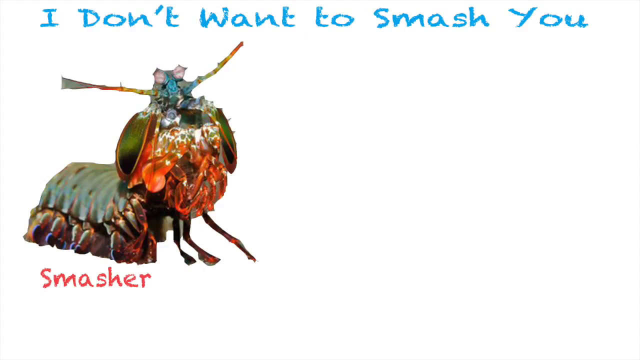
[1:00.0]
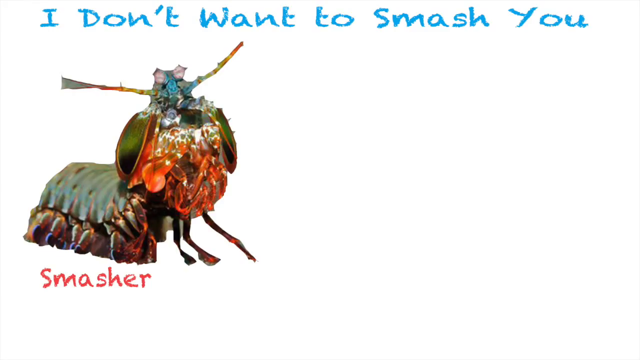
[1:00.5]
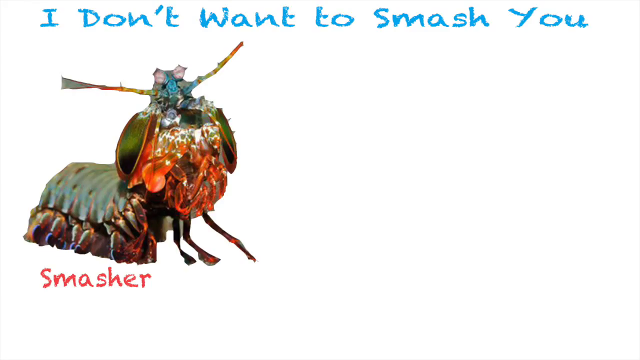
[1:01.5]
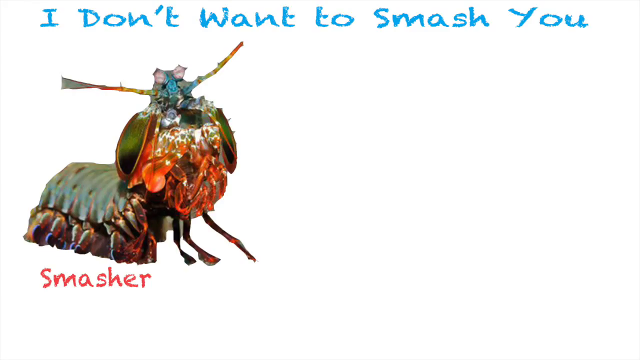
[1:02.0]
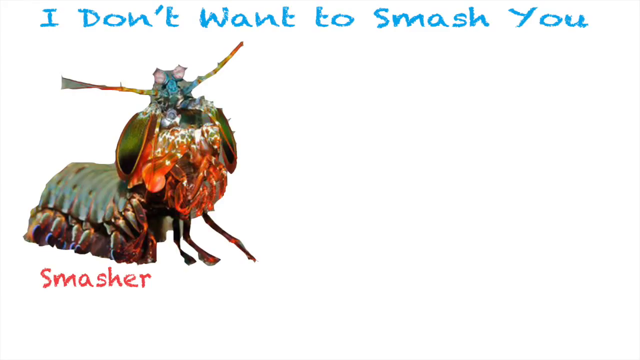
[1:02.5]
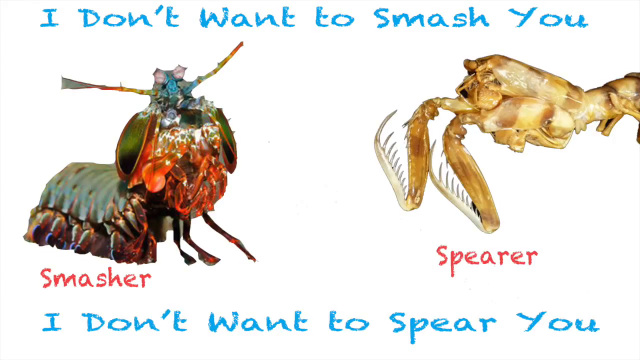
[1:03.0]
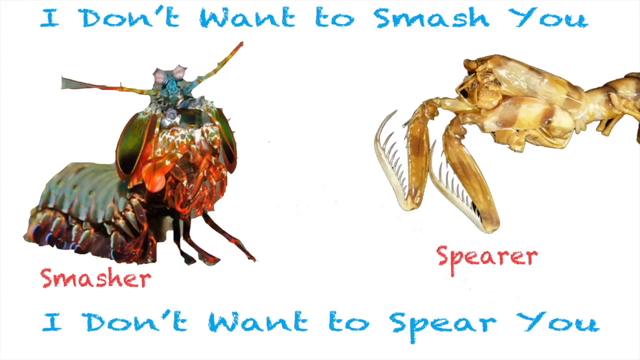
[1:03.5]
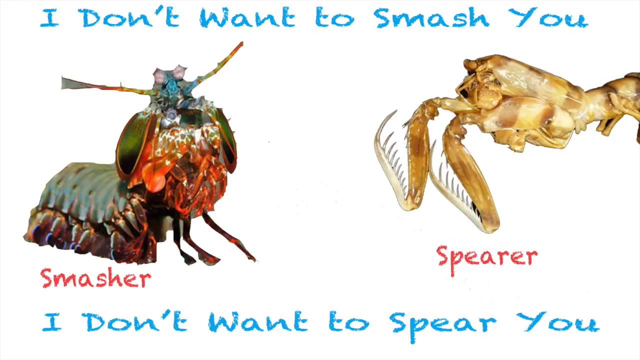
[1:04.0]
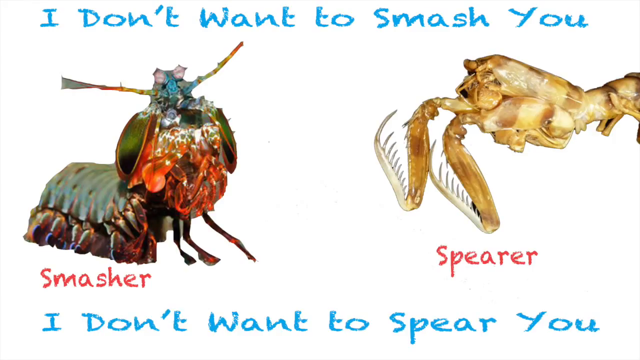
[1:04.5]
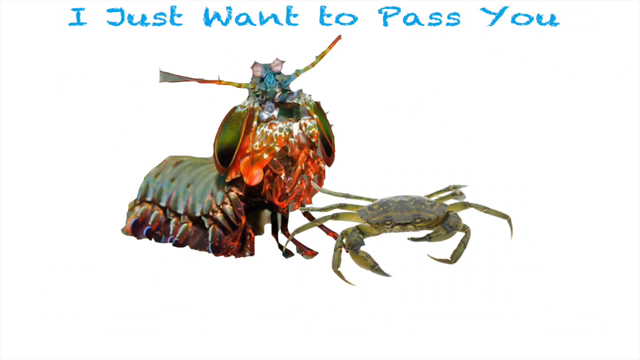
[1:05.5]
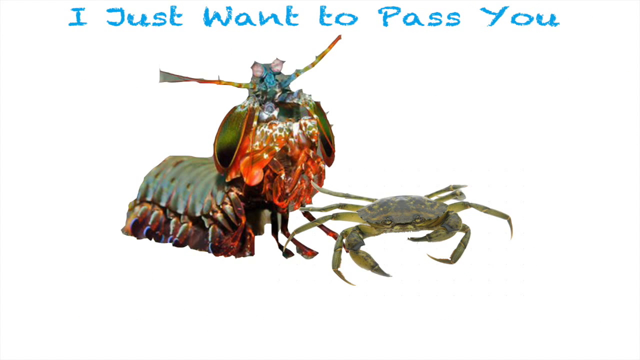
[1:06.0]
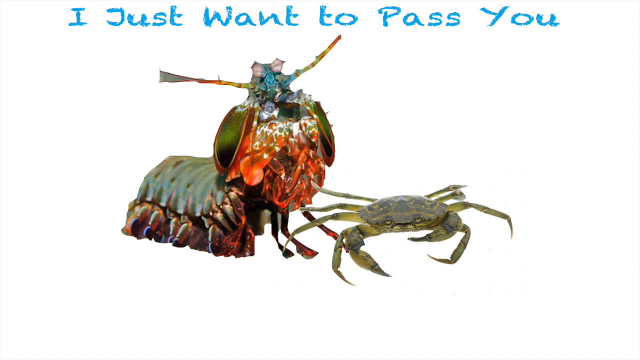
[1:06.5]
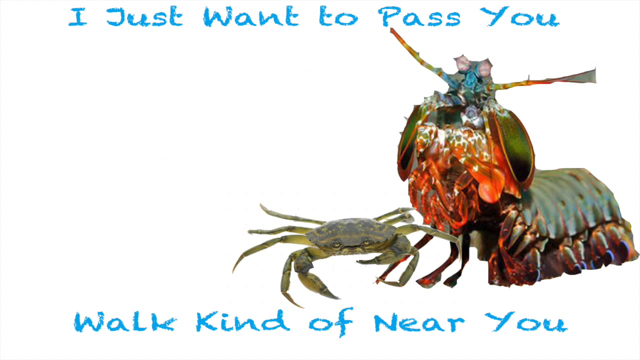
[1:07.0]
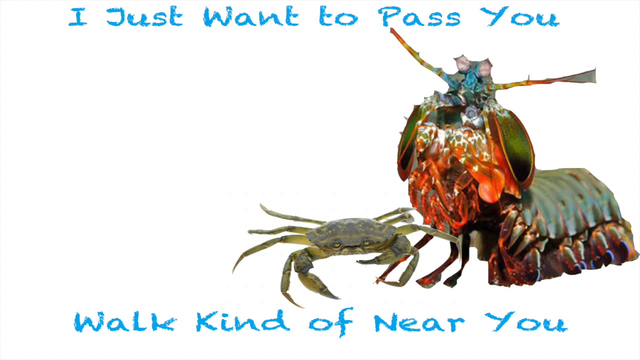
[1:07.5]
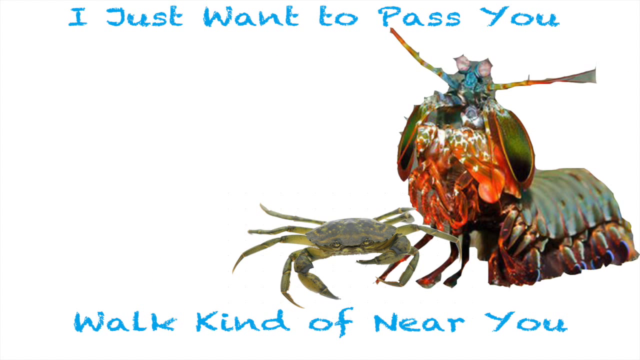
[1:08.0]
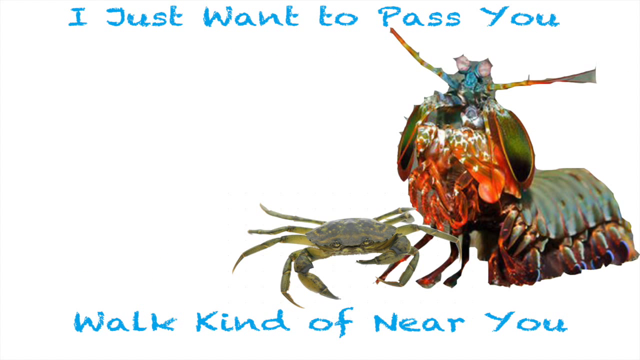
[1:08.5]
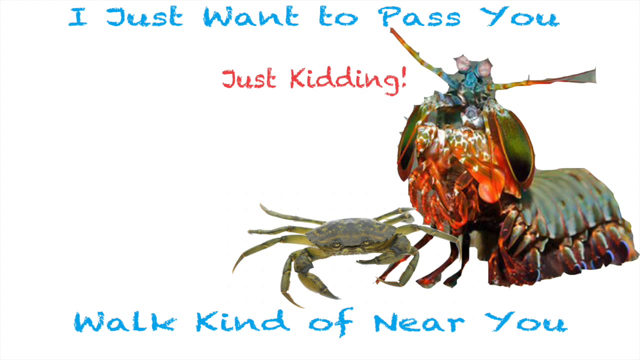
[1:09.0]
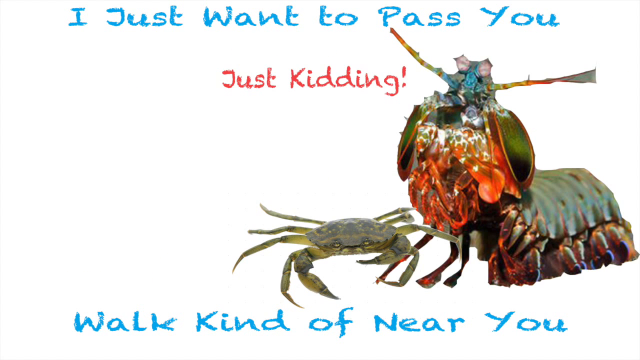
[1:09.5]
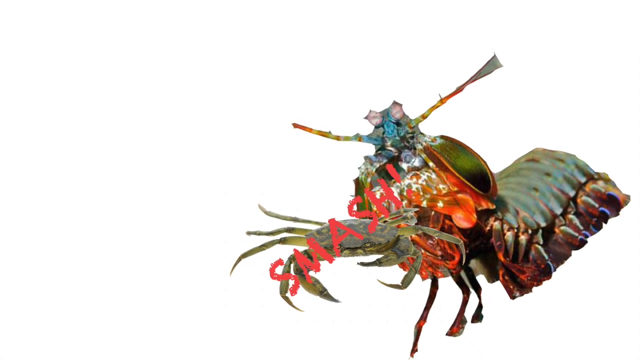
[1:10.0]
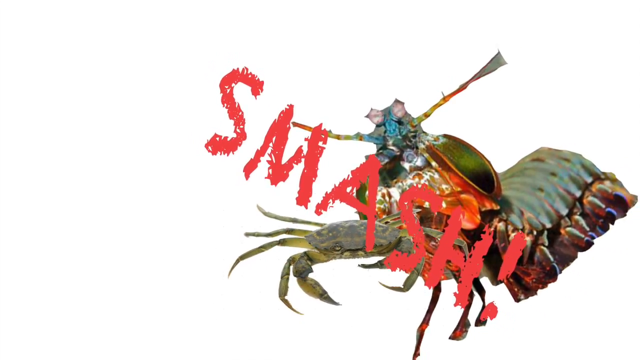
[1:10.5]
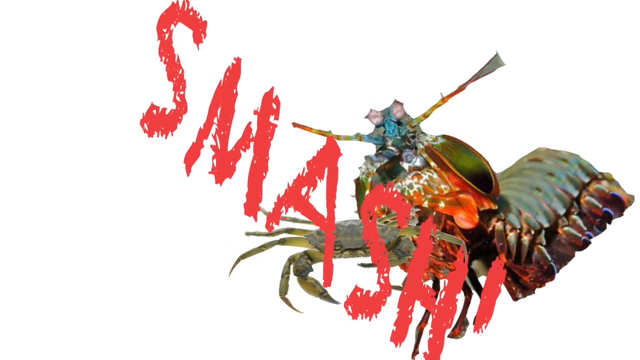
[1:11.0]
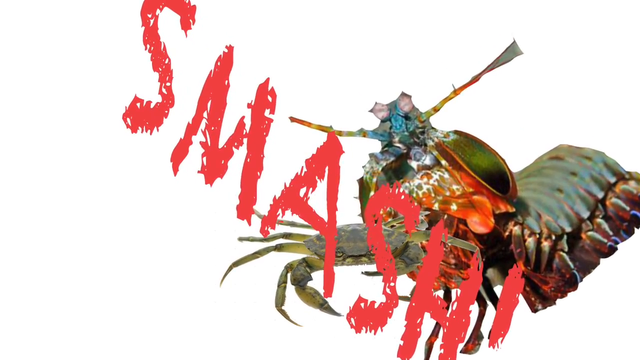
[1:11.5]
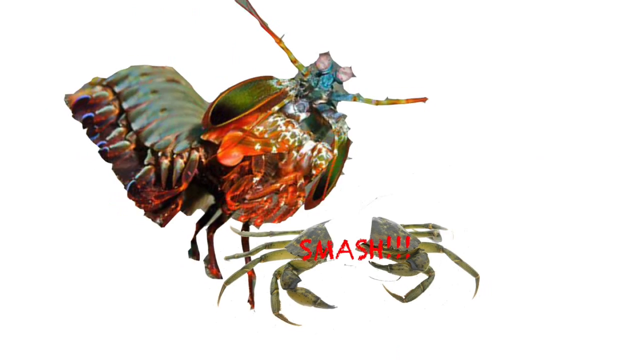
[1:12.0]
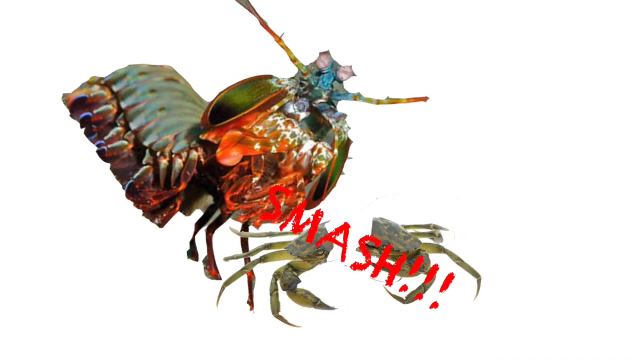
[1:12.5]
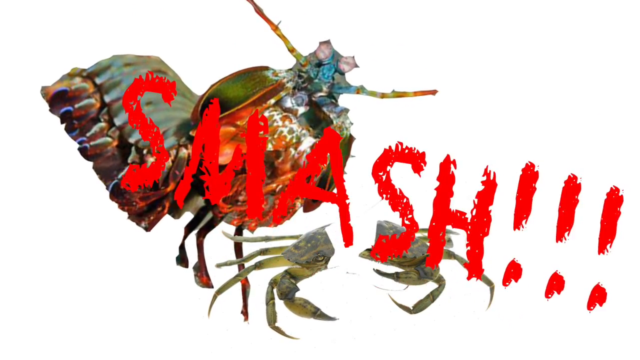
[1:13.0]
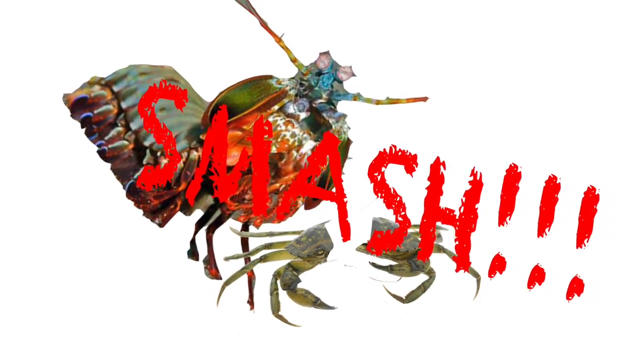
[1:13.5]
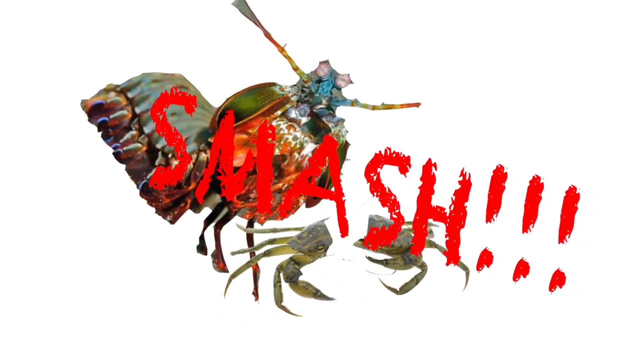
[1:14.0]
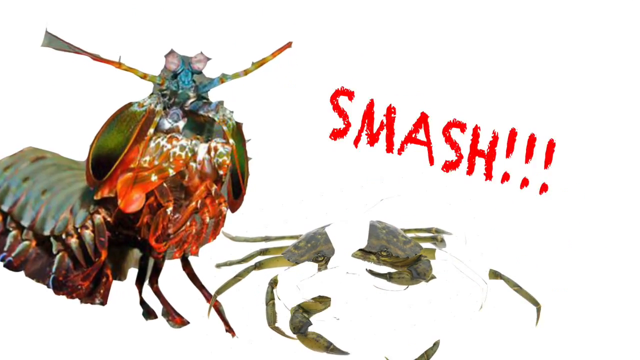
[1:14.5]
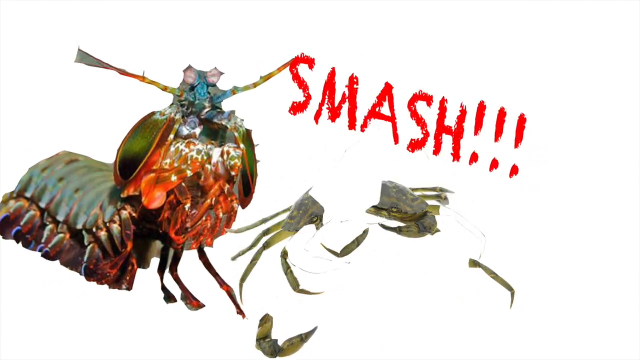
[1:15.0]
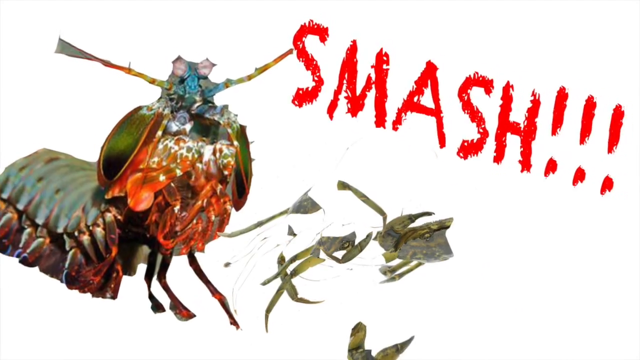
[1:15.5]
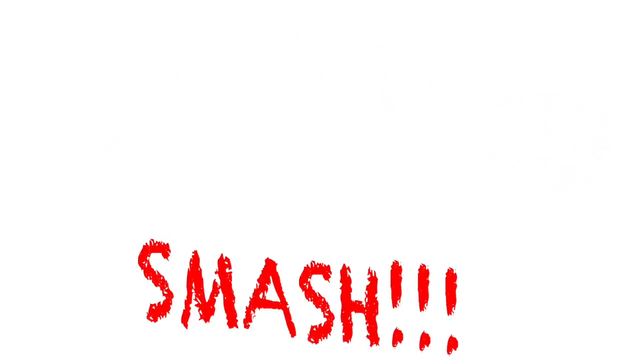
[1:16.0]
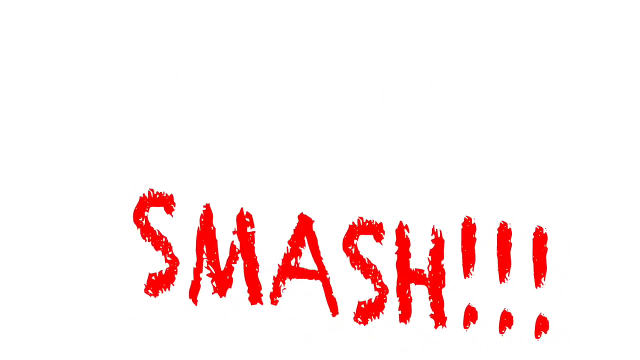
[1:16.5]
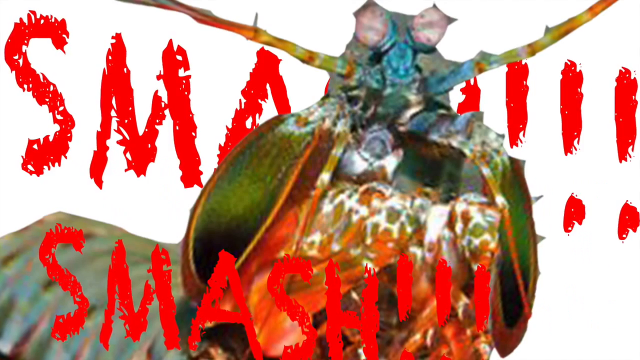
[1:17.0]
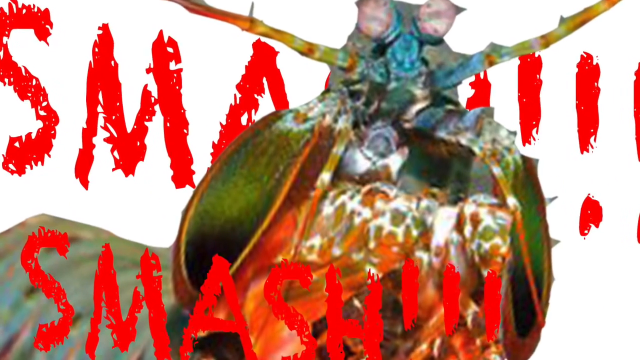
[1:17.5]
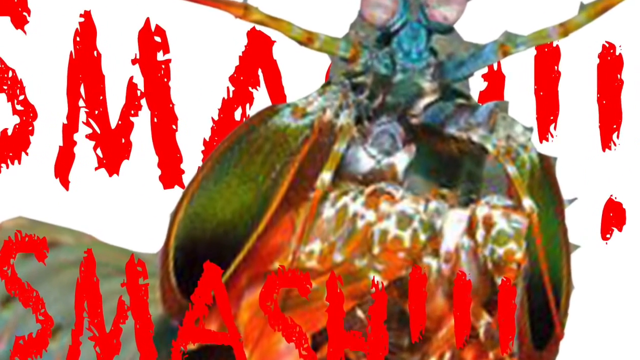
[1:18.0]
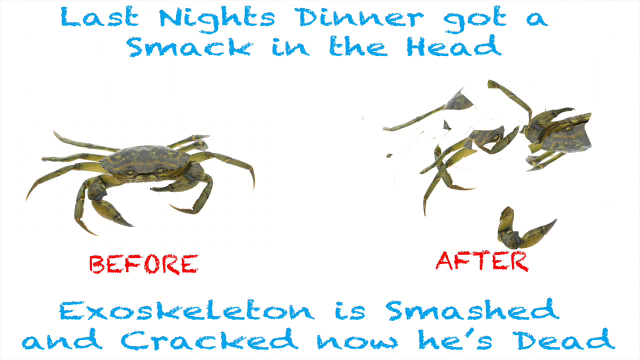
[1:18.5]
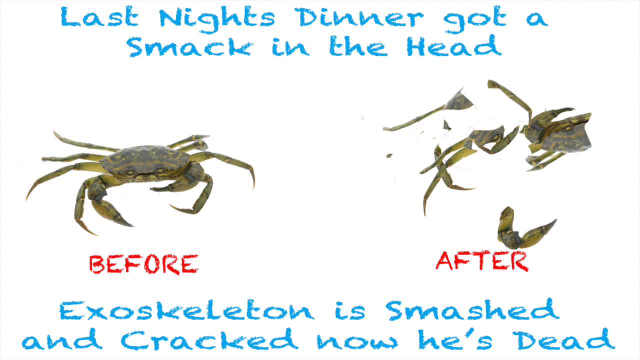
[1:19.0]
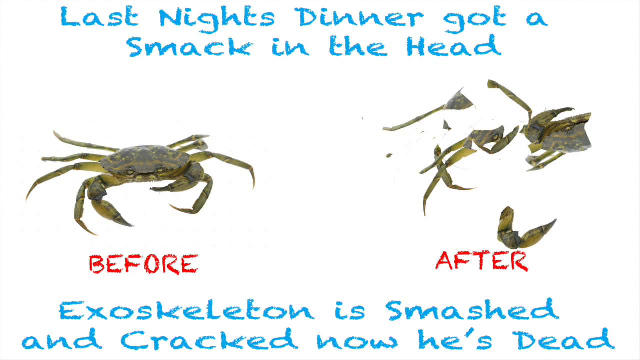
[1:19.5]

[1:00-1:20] An image shows a smasher and a spearer, with the text above them reading "I don't want to smash you, and I don't want to spear you." The next image shows a crab and a shrimp with "I just want to pass you" above them. Then the shrimp and the crab appear on the right side of the screen, with the text "walk kind of near you" below. Next, the shrimp appears with red text reading "smash, smash, smash"; the word smash pops up many times across the screen in a large red font.